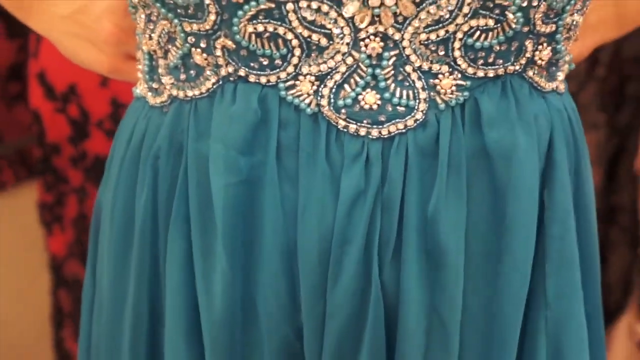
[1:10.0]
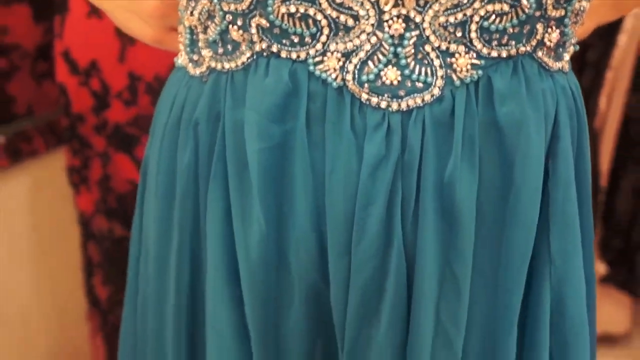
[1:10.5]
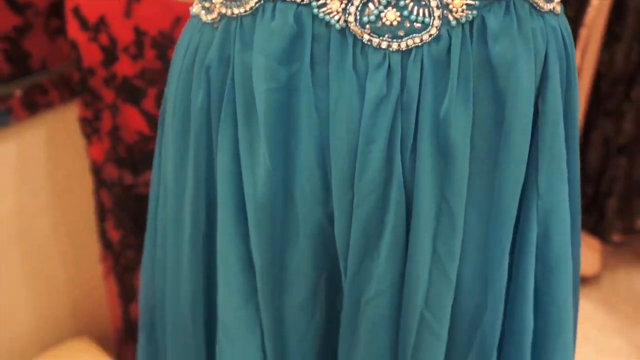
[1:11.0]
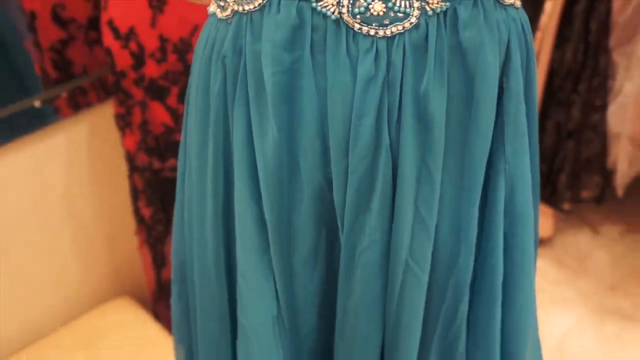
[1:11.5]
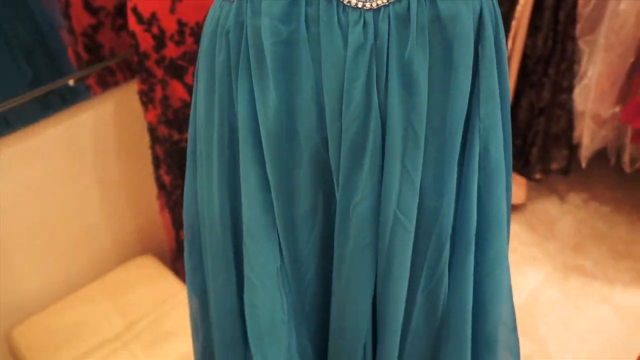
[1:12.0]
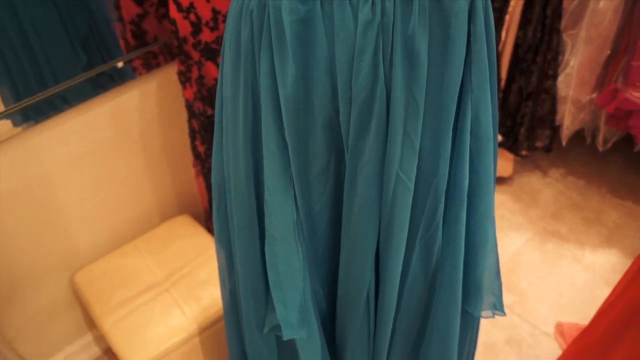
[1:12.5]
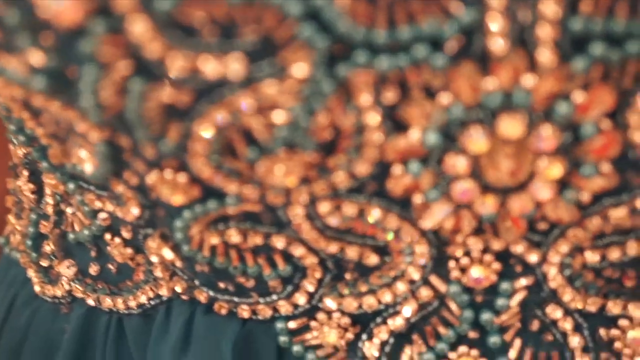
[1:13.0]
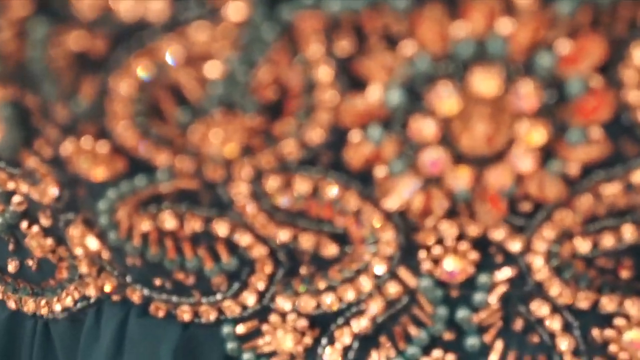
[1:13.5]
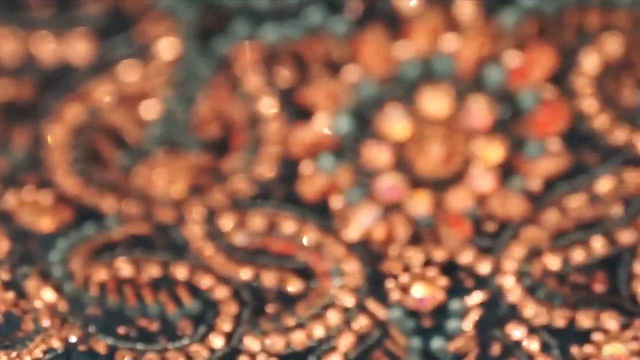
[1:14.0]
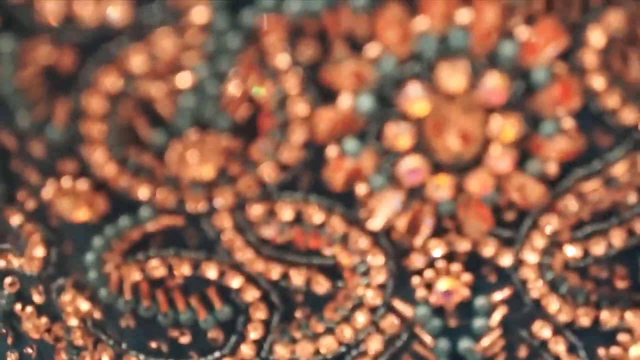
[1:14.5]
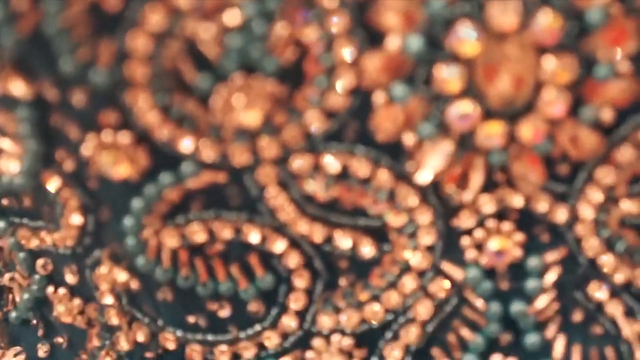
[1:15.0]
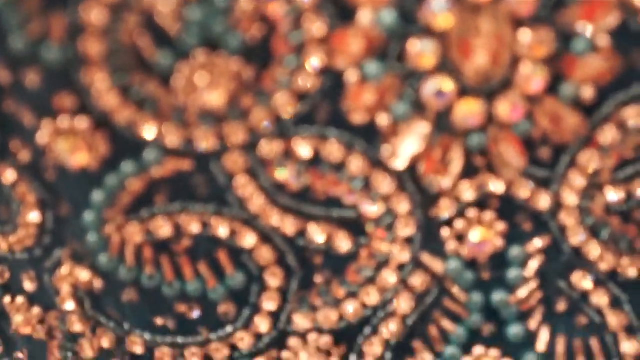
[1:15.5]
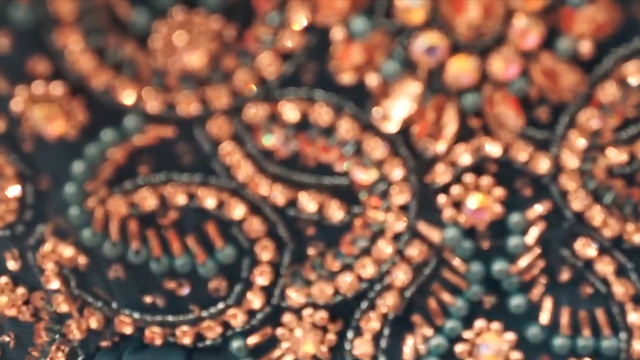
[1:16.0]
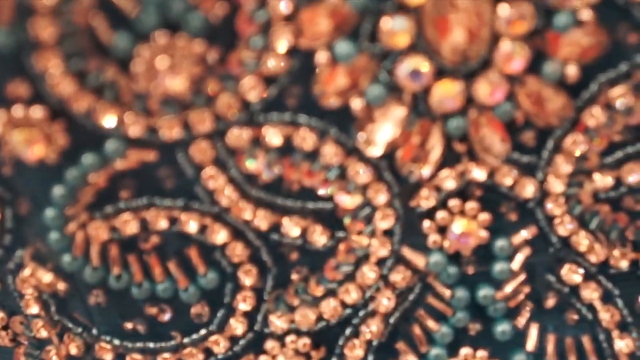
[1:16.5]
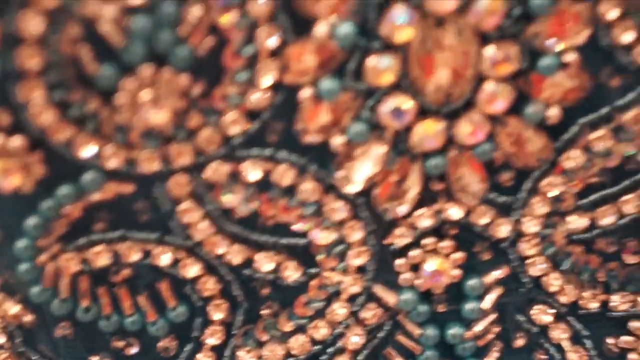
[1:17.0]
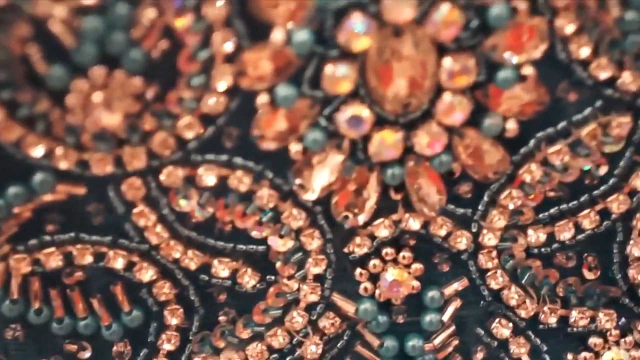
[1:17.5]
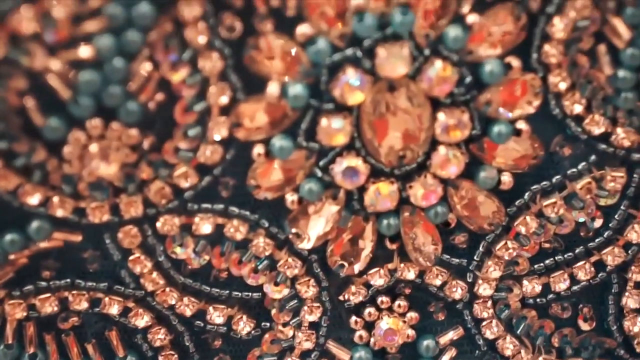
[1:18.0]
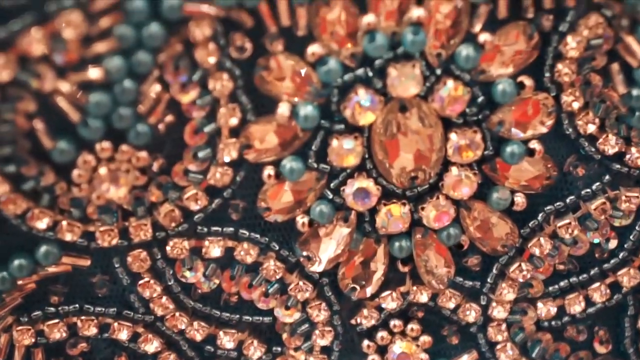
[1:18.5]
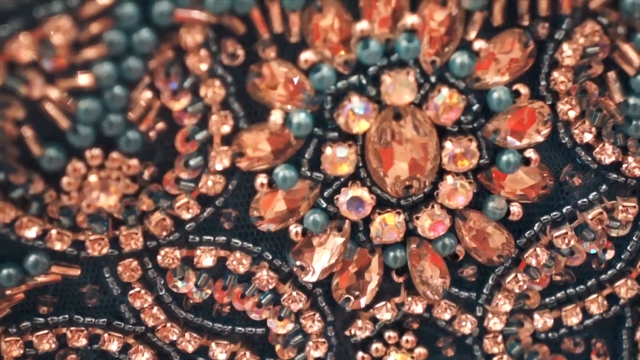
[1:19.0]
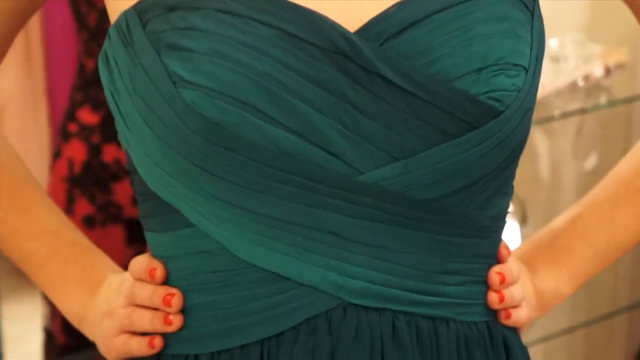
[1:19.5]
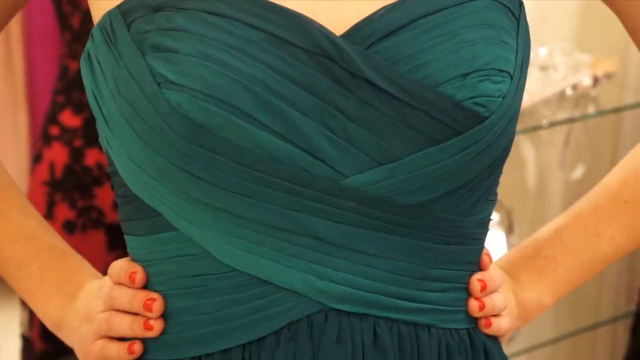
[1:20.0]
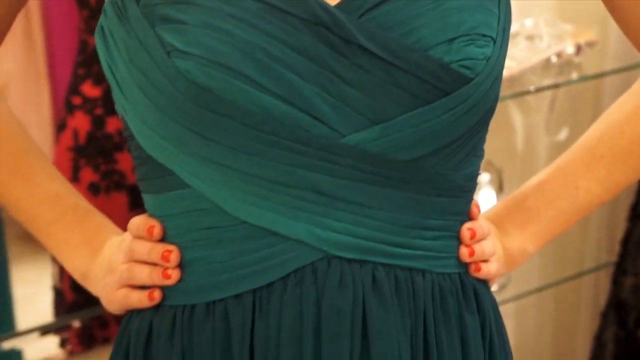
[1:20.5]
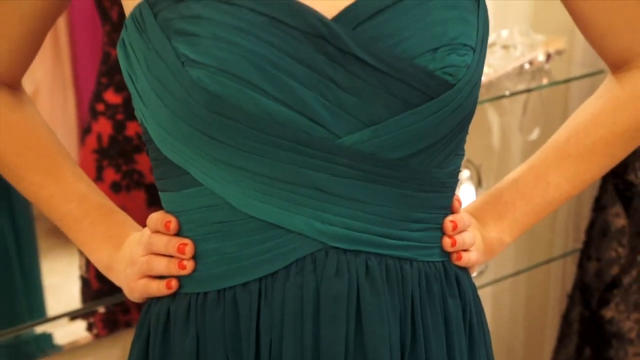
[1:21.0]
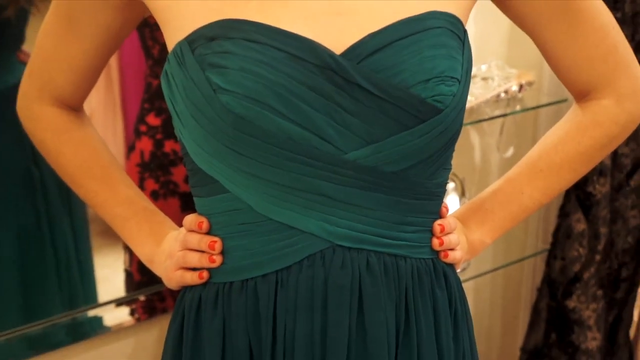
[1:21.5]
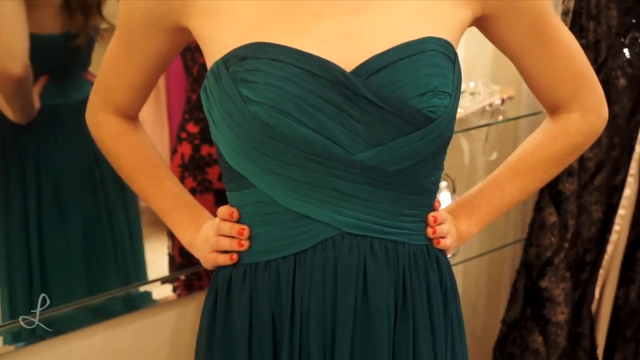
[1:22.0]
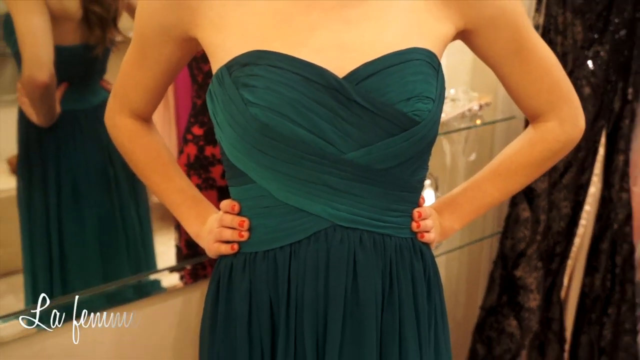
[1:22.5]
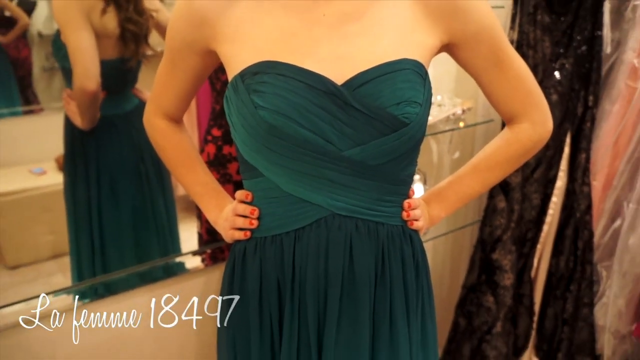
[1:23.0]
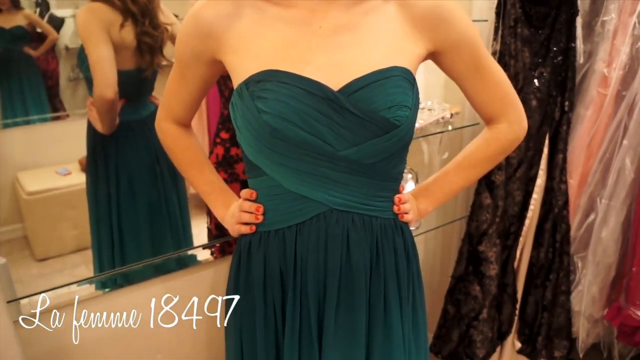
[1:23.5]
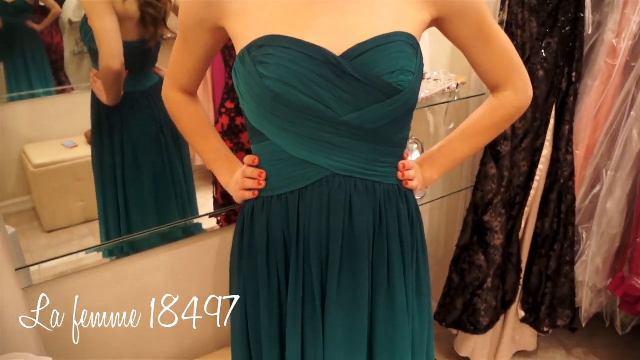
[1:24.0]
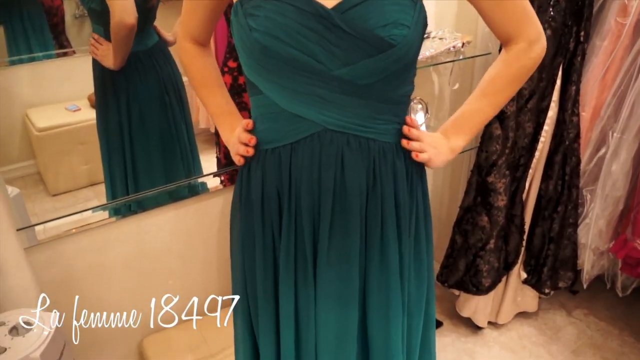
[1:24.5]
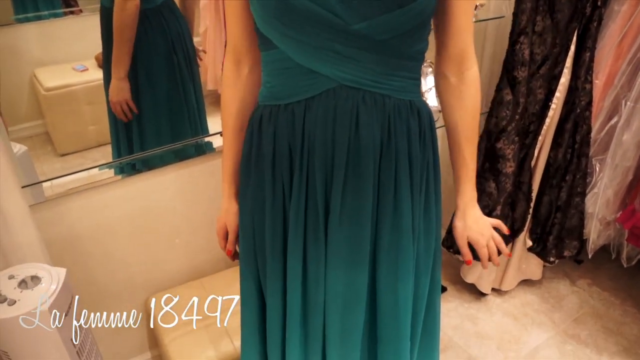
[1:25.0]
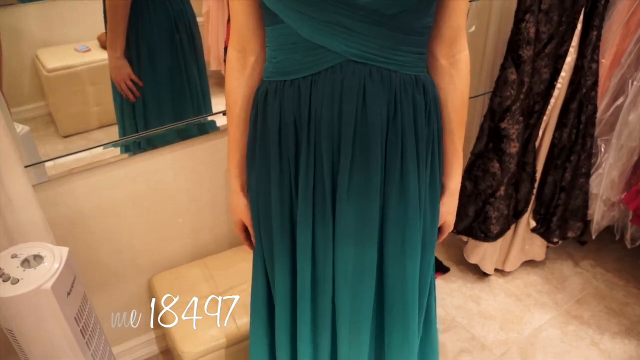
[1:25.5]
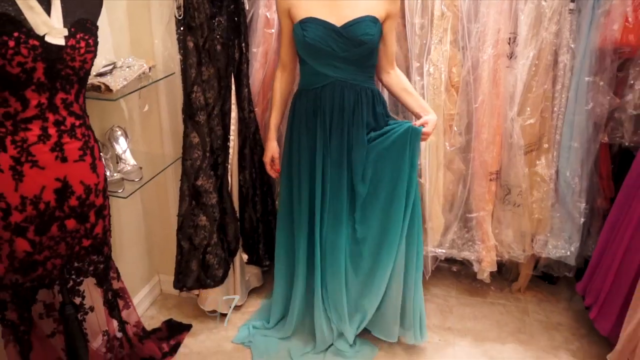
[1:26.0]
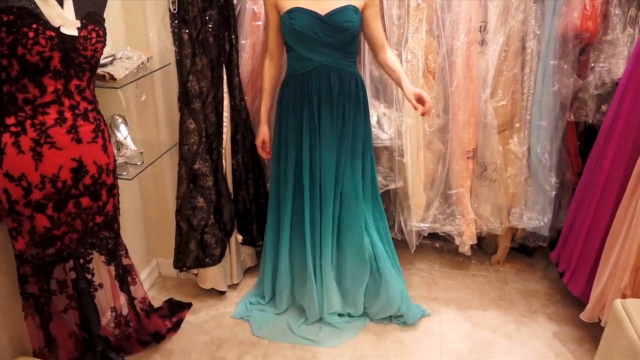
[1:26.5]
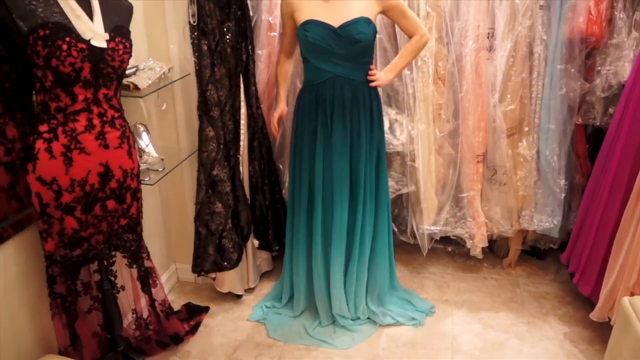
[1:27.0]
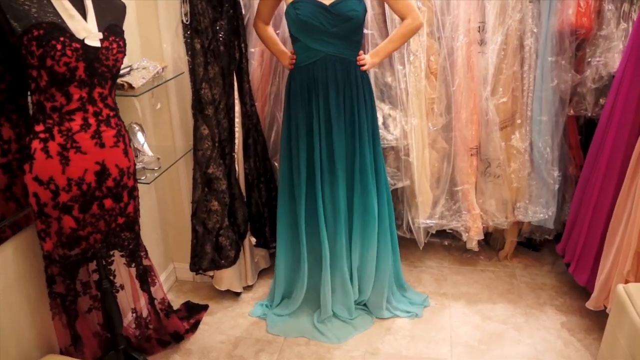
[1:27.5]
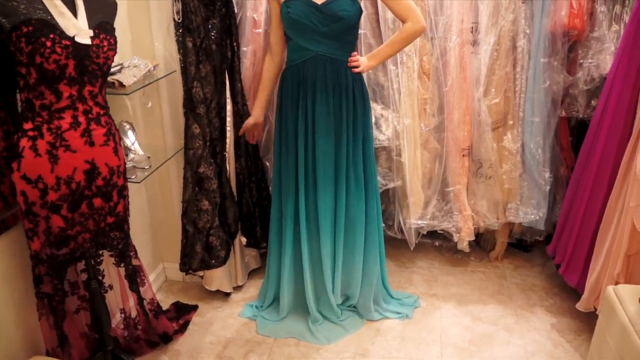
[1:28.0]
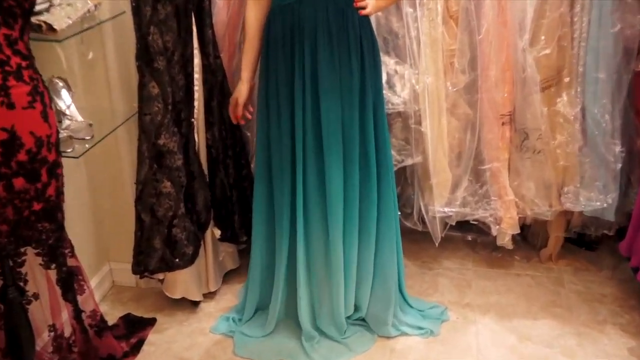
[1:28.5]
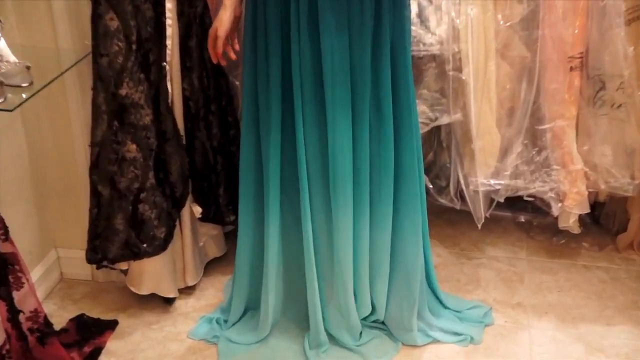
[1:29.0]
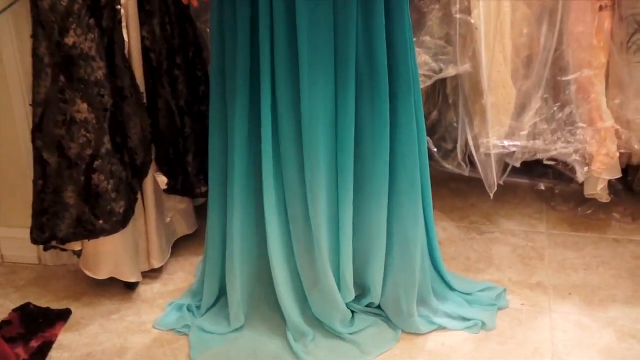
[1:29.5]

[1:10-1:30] A close-up view shows a white lady trying on the bluish dress with the jewelry-like sequins from the waist up. The camera pans back to show the bluish bottom part of the dress, then pans in very close to the jewelry-like sequins on the brassiere part of the top. Next, somebody wears a green wrap dress with a green skirt and a sleeveless, backless green top; this dress is the Le Femme 18497. The camera pans backward, revealing a red and black dress on the left side that looks almost Halloween-like, then a slightly see-through black one. Other dresses in the background are in plastic covers, with a pinkish-red one on the right side and a tan one. The camera pans closer to the bottom part of the dress. The lighting has a slightly orangish color.